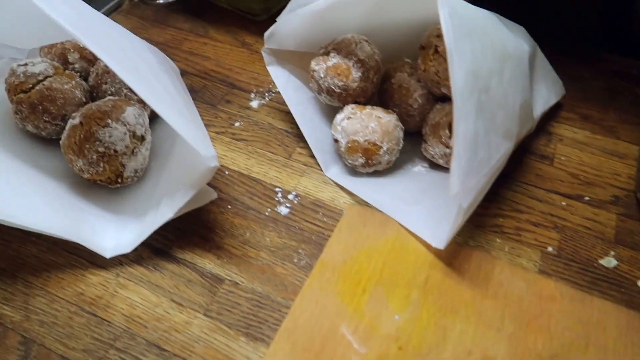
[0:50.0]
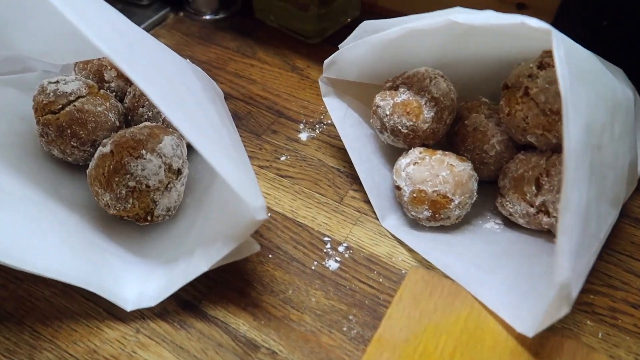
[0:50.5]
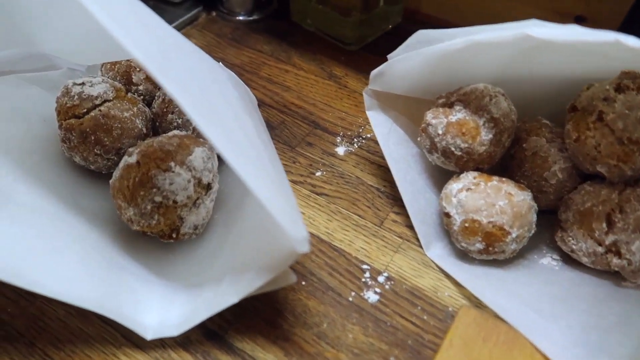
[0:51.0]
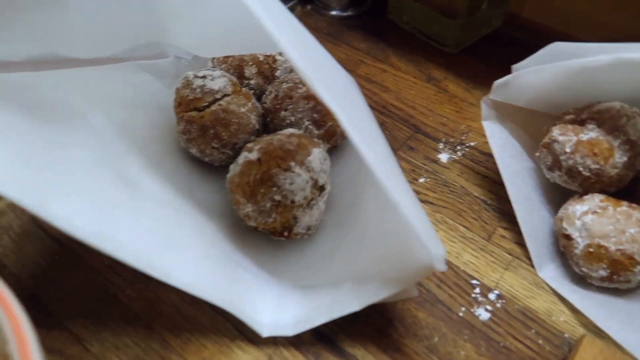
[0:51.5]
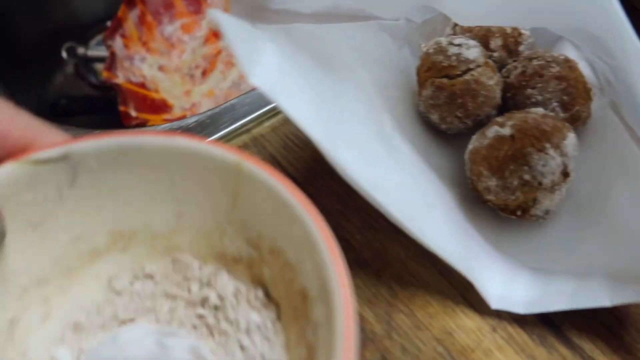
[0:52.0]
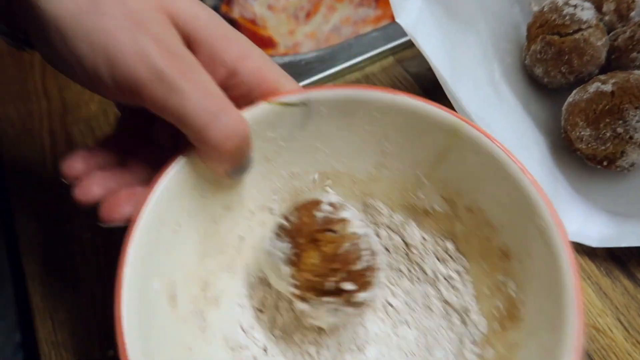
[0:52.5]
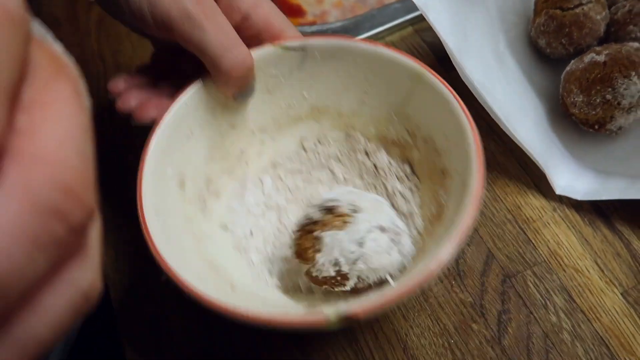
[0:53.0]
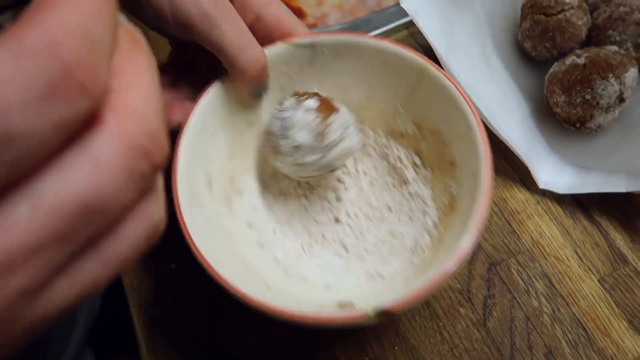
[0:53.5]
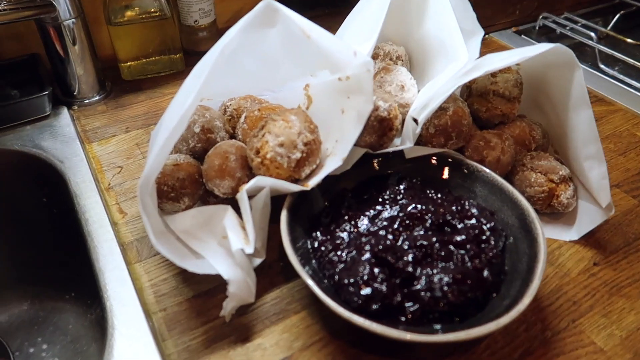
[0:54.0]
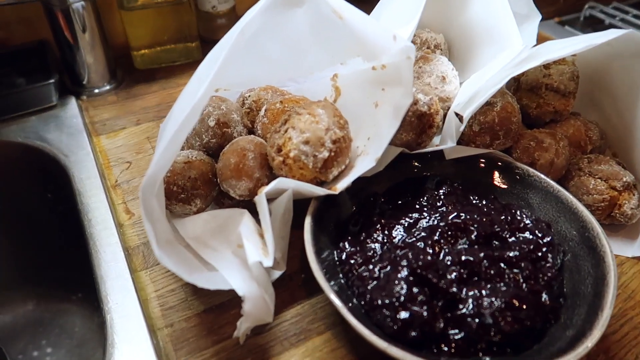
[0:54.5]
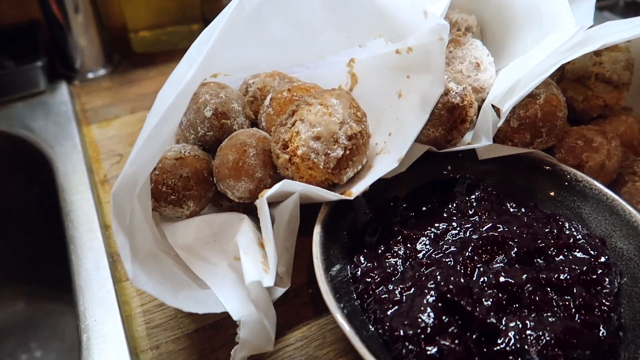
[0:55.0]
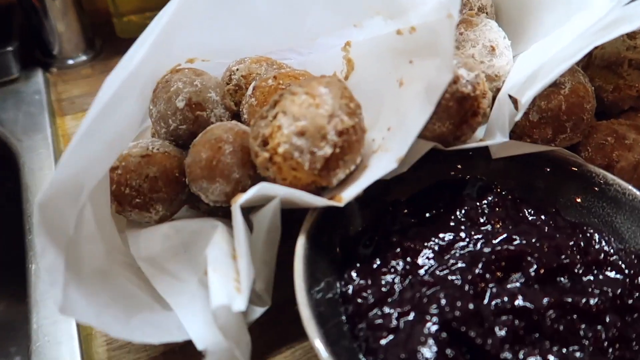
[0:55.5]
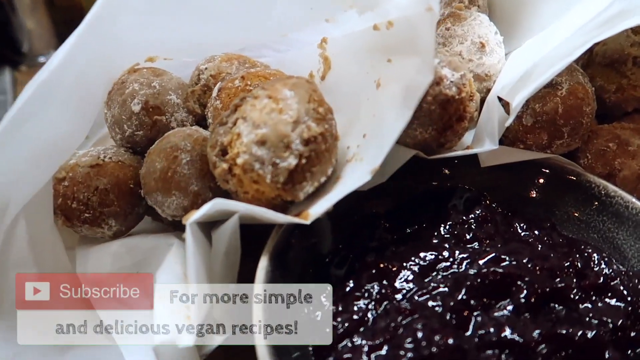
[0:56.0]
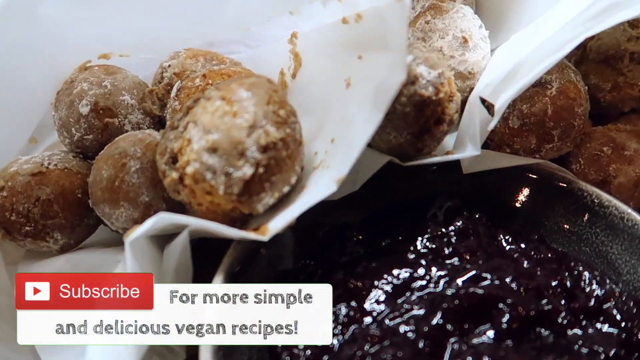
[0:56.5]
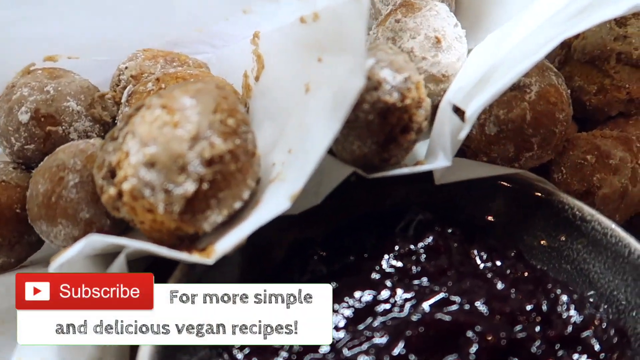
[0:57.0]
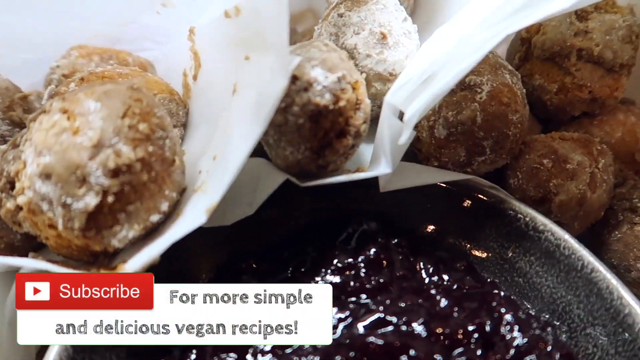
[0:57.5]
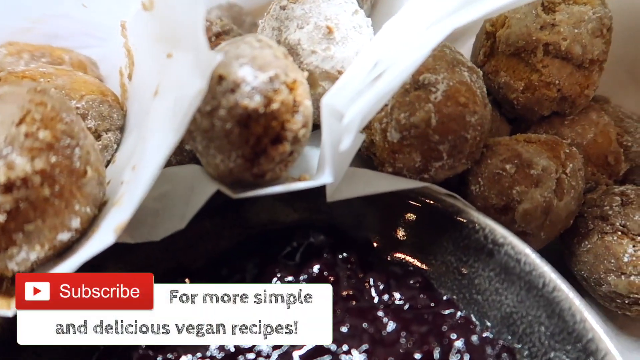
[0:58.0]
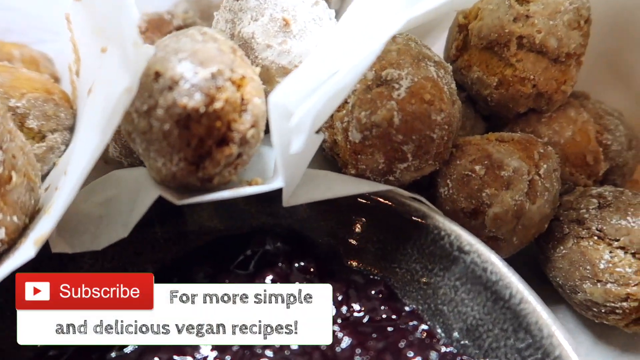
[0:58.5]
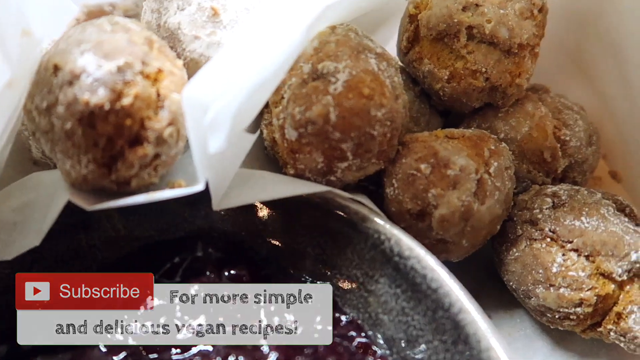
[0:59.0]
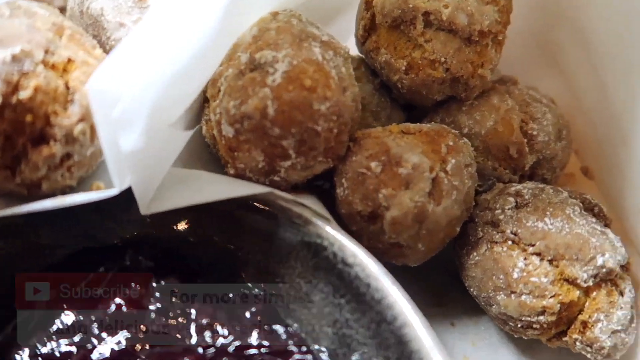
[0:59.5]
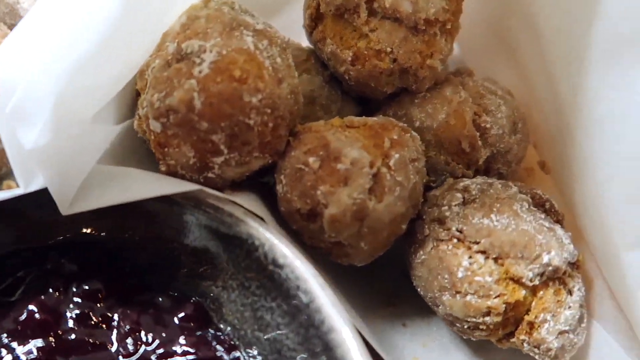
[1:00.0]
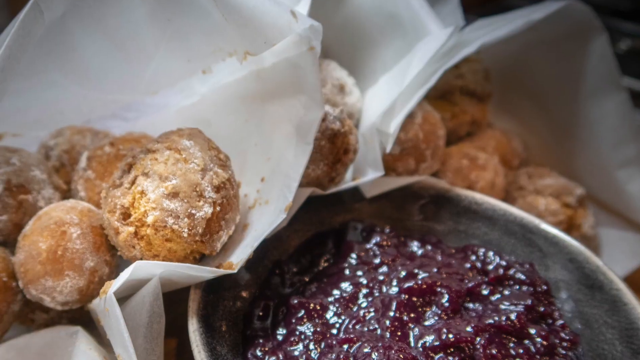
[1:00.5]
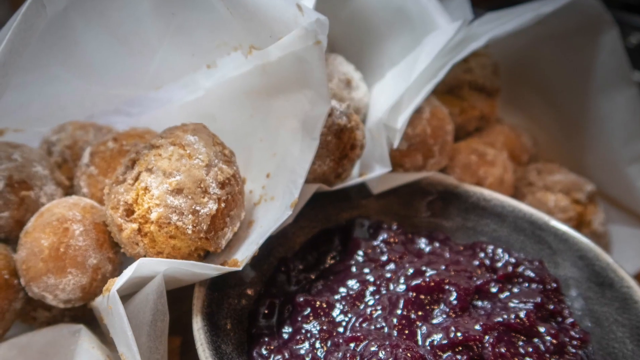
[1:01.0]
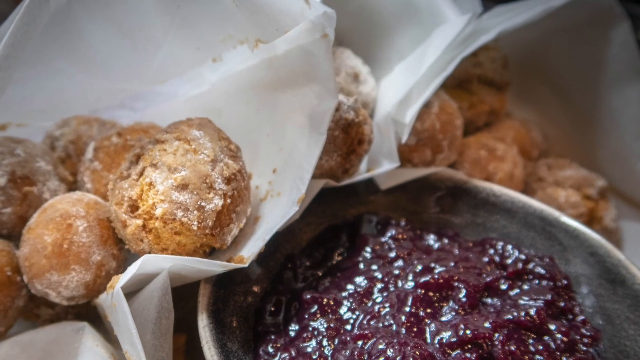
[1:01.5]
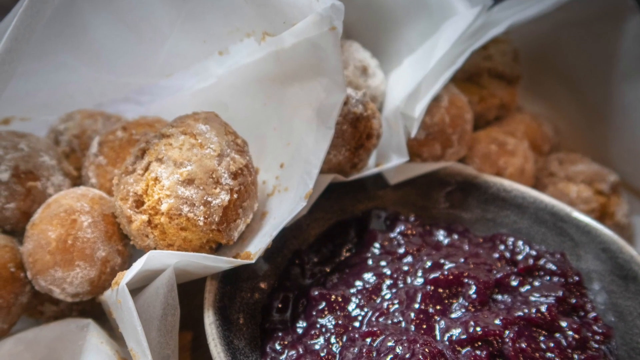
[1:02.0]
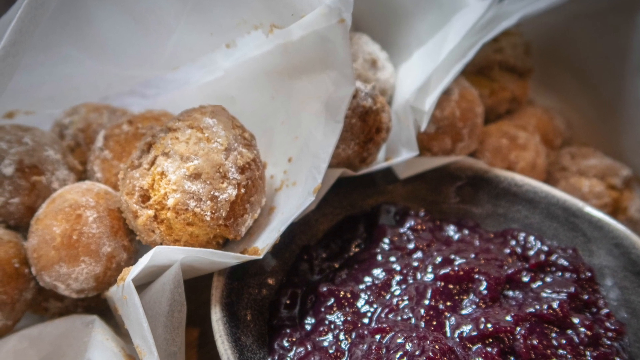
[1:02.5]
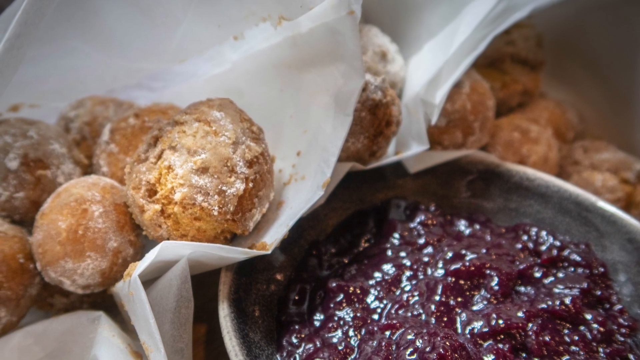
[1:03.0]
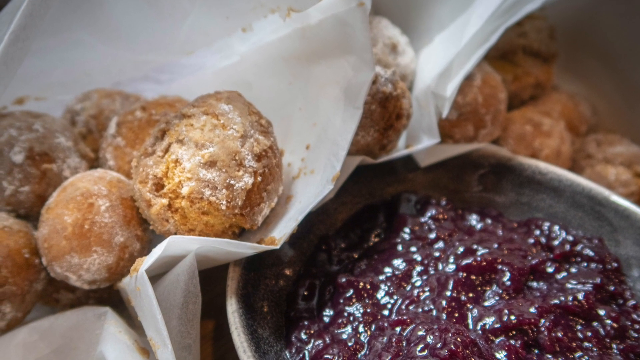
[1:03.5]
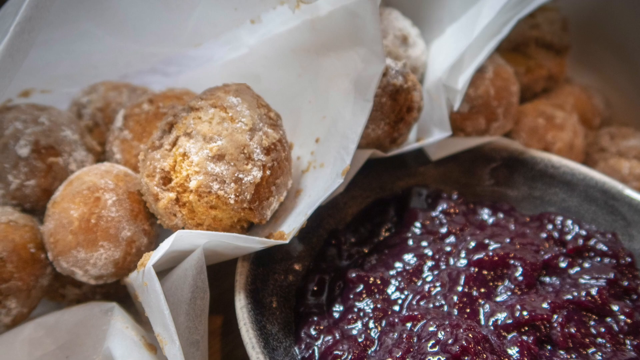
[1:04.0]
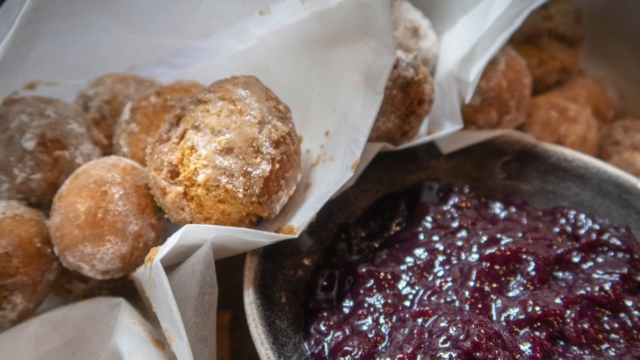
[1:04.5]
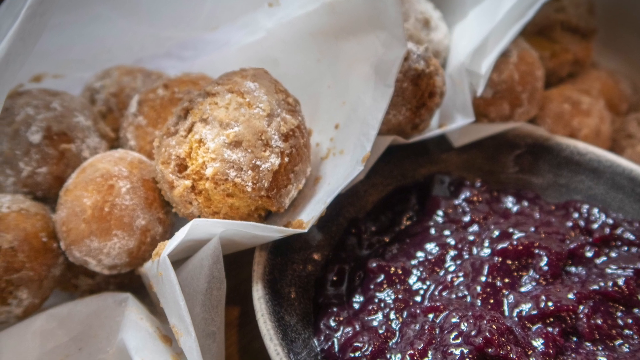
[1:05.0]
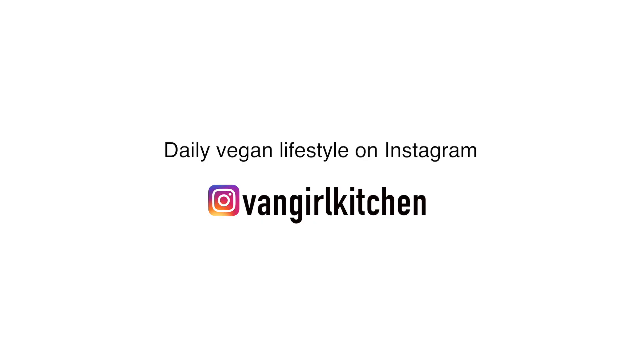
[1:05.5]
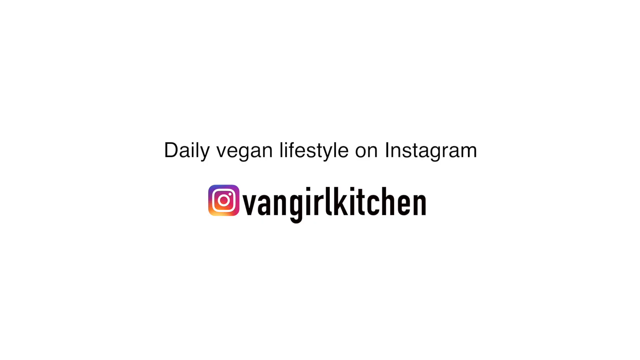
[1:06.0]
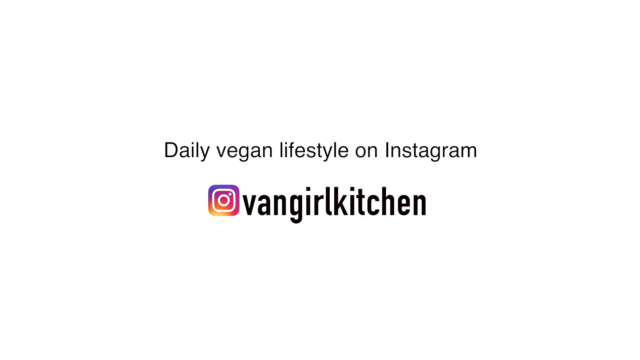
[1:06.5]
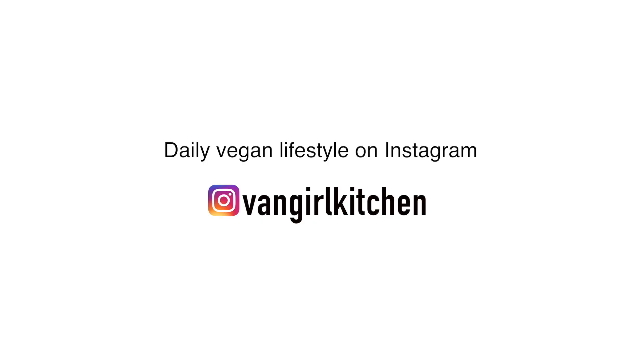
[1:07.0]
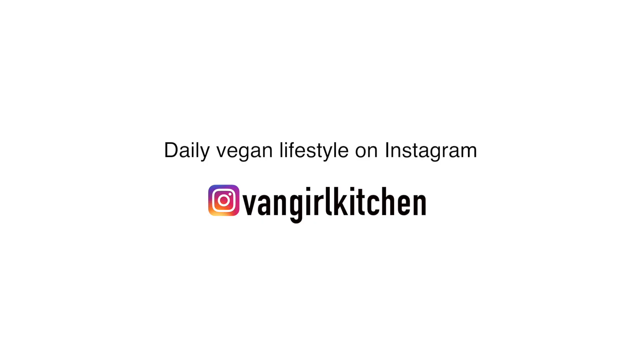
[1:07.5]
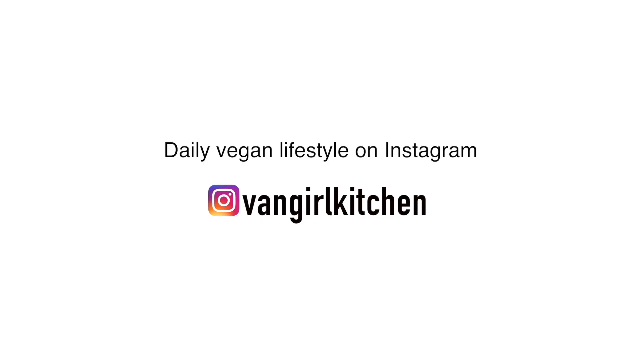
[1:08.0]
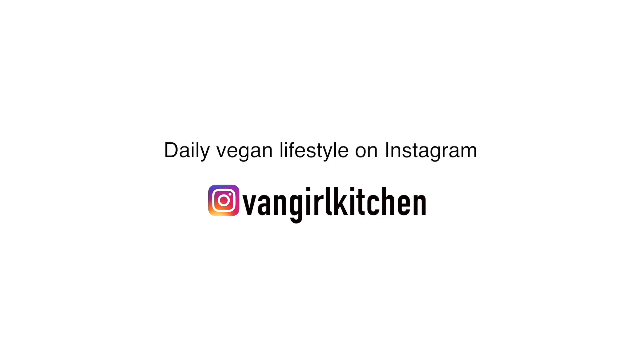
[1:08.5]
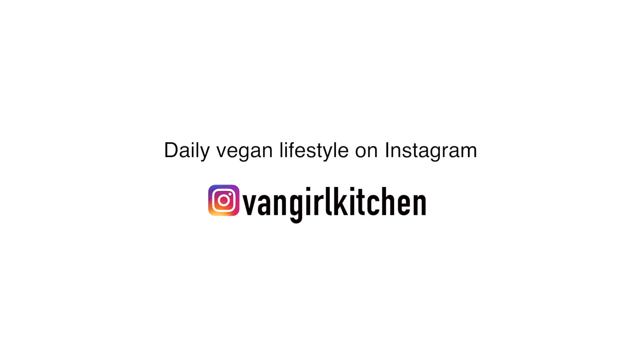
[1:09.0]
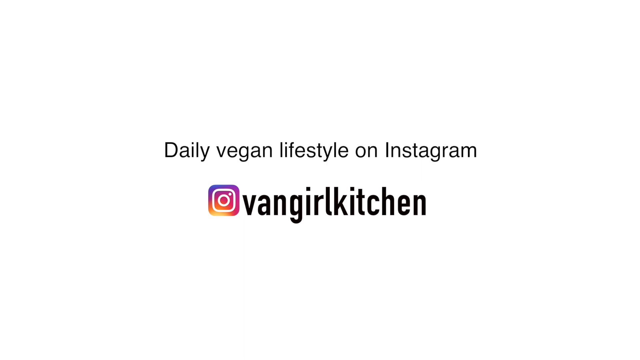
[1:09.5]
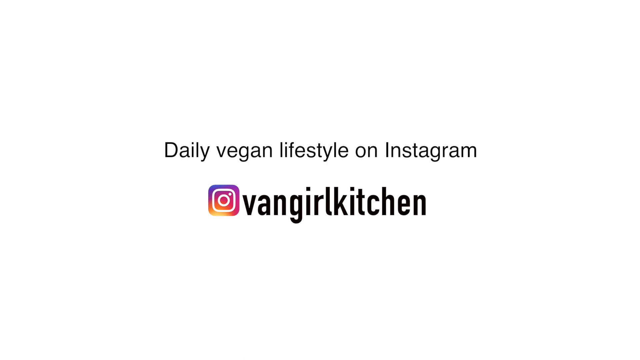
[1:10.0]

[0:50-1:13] The donut holes on the left have white powder on them, and the ones on the right look almost like they have a glaze of icing. They are presented in bags, probably four to six in each bag, and the camera zooms in on them. The small bowl where the topping is mixed is shown. A jelly or jam is shown with the doughnuts presented above it in little white paper folders that are almost funnel-like. The final product is three bags of doughnuts, all different types, around what looks like jelly or jam in a silver bowl. The video ends with "vegan lifestyle", Van Girl Kitchen, and an Instagram shown on screen. It looks like the cooking is done at home, on a regular table.